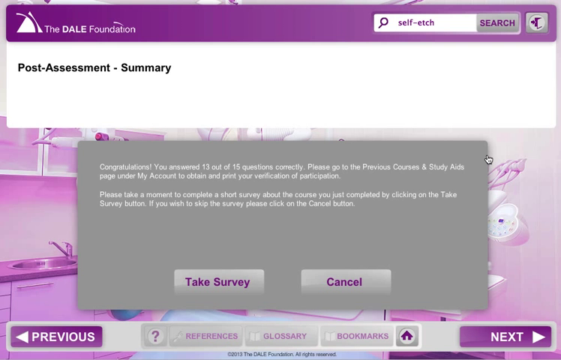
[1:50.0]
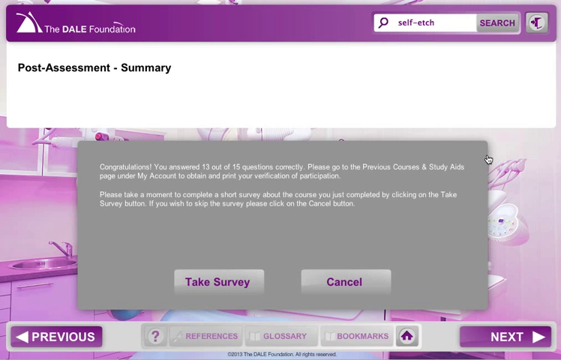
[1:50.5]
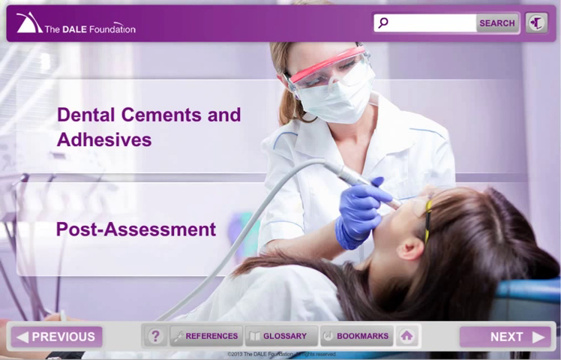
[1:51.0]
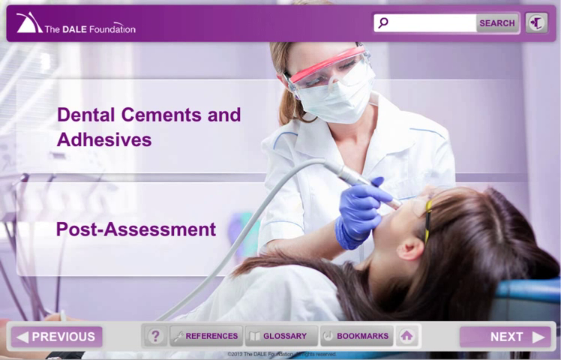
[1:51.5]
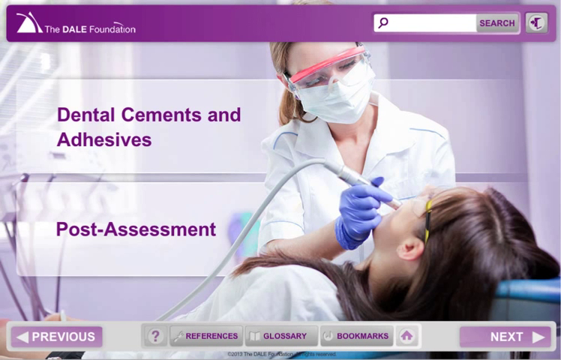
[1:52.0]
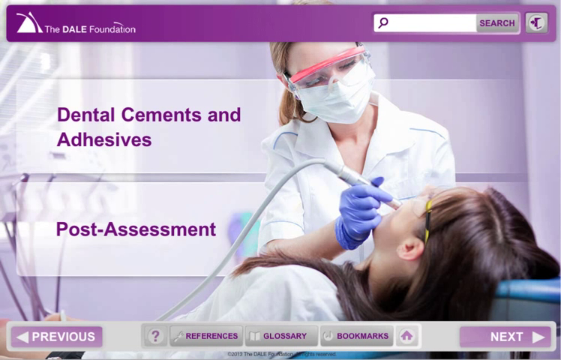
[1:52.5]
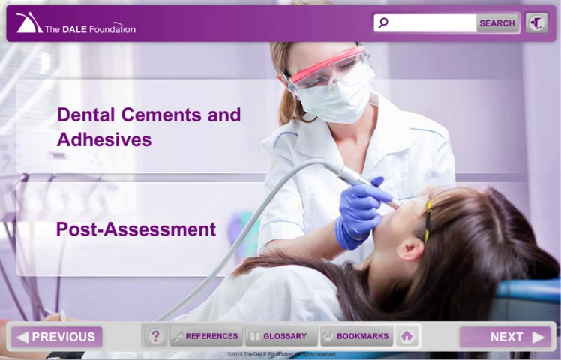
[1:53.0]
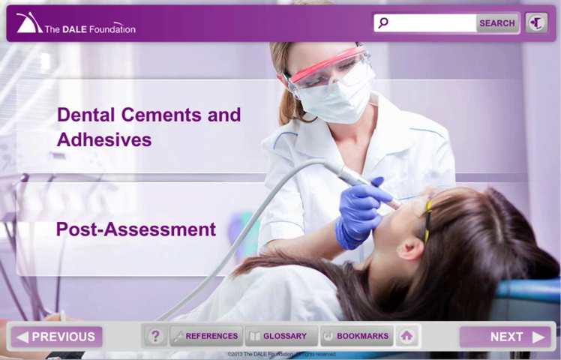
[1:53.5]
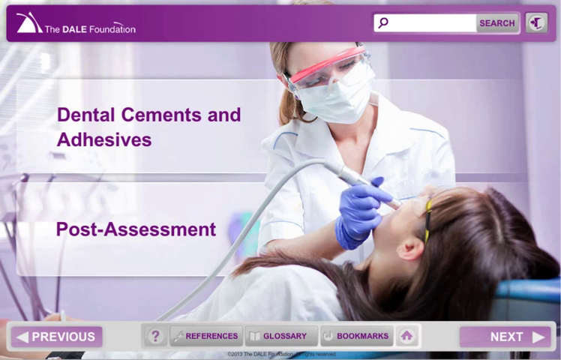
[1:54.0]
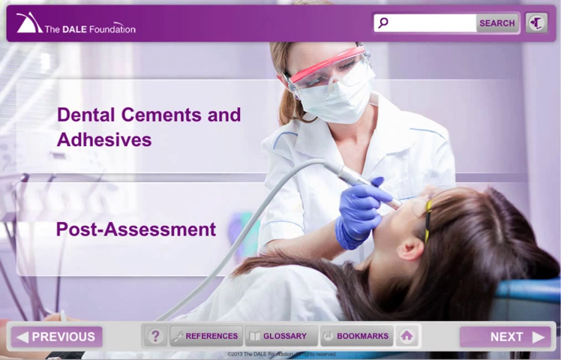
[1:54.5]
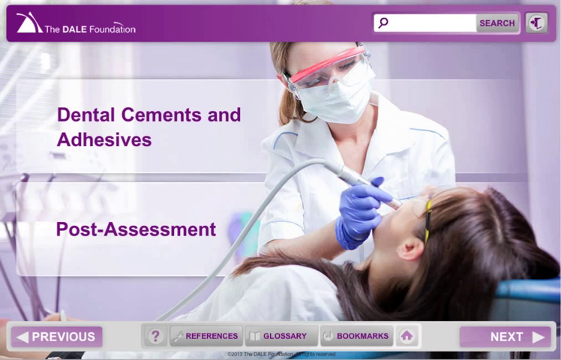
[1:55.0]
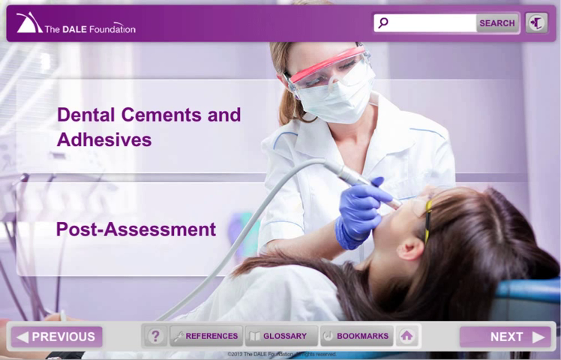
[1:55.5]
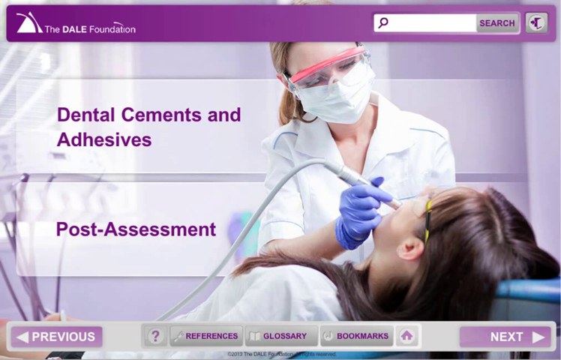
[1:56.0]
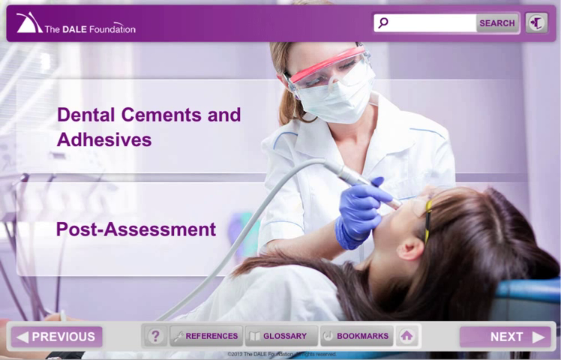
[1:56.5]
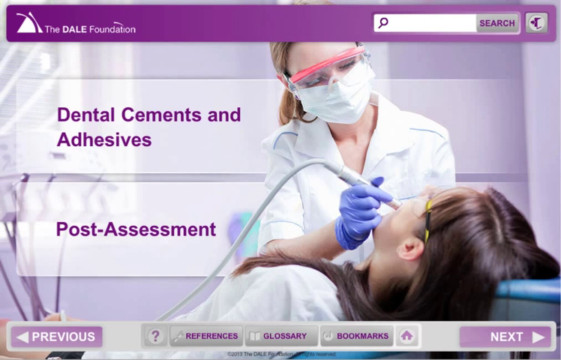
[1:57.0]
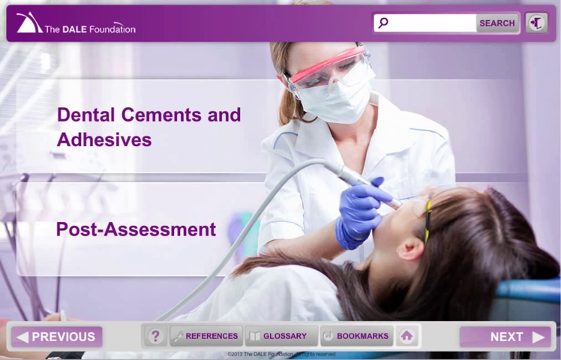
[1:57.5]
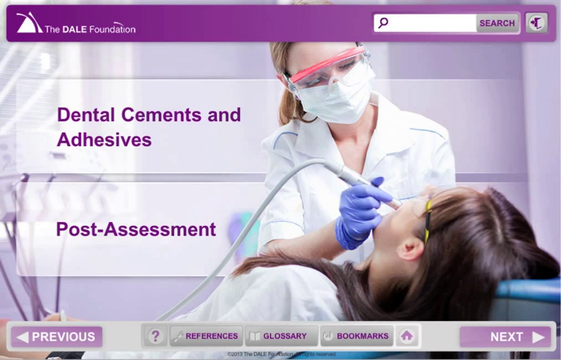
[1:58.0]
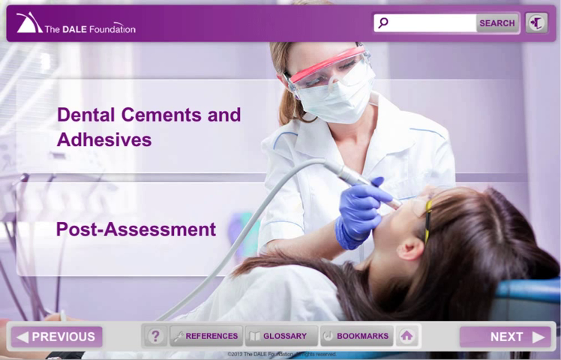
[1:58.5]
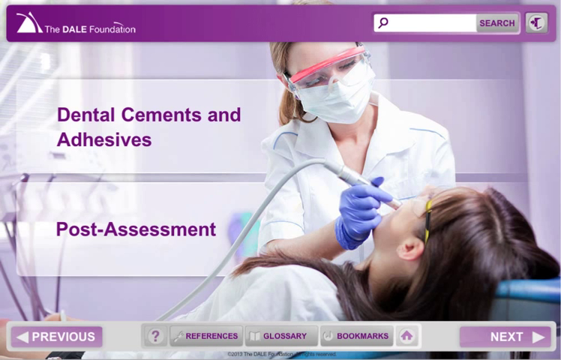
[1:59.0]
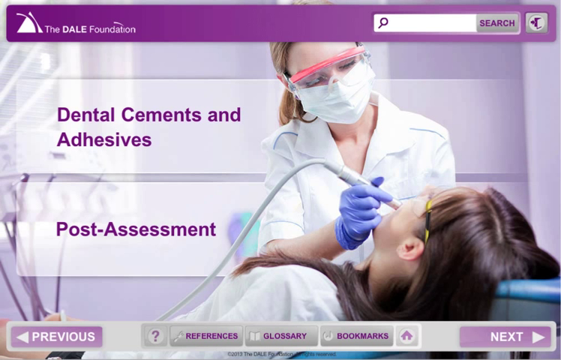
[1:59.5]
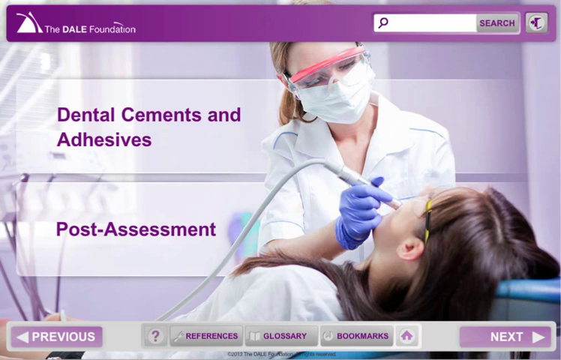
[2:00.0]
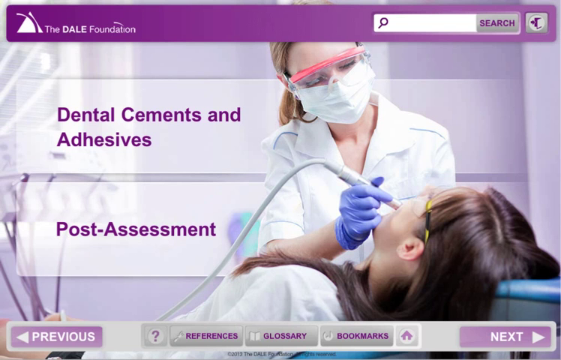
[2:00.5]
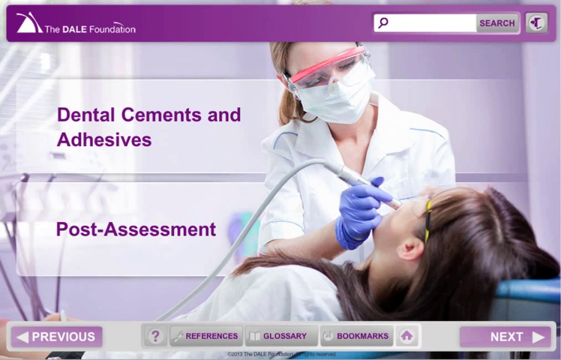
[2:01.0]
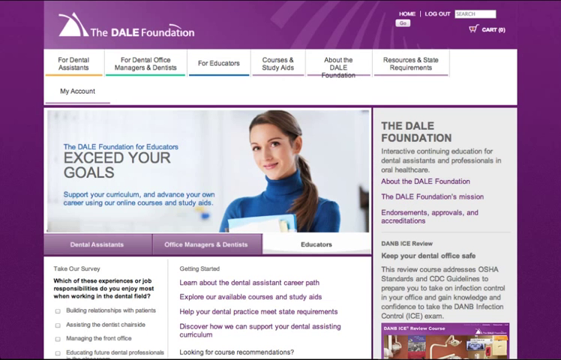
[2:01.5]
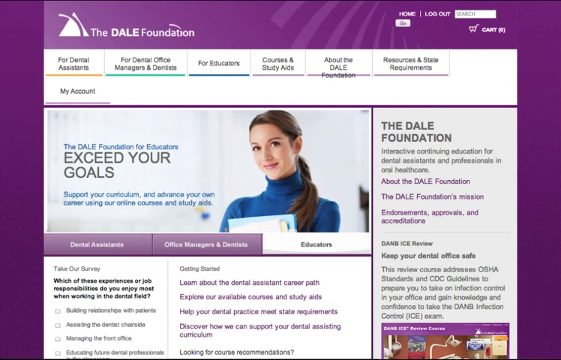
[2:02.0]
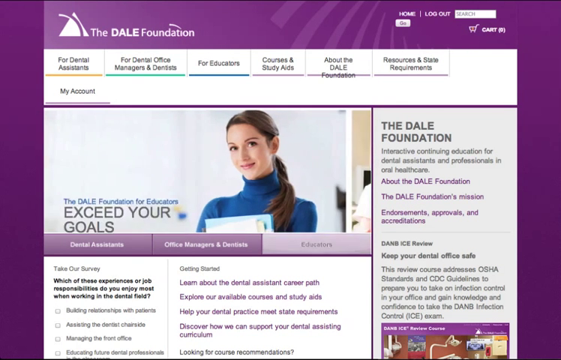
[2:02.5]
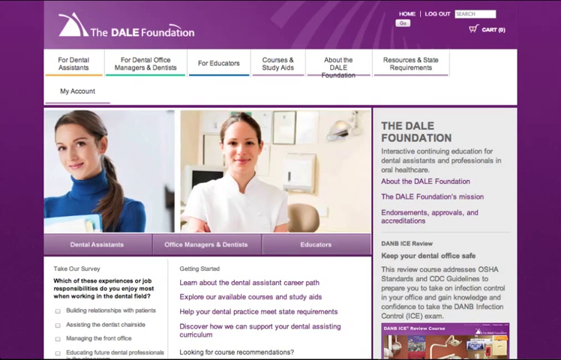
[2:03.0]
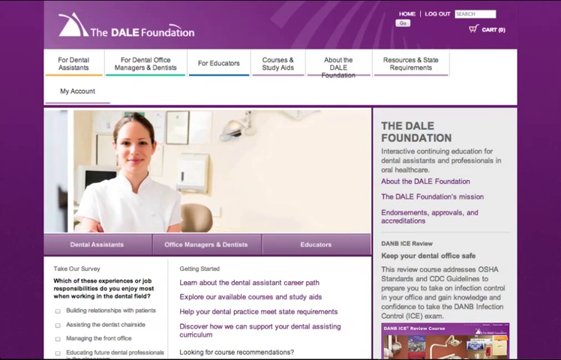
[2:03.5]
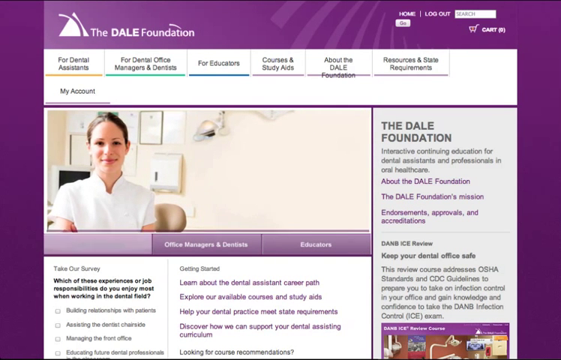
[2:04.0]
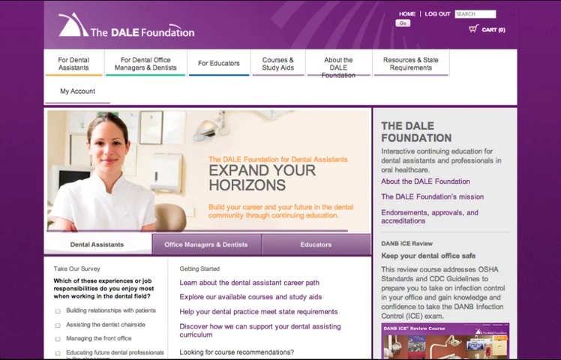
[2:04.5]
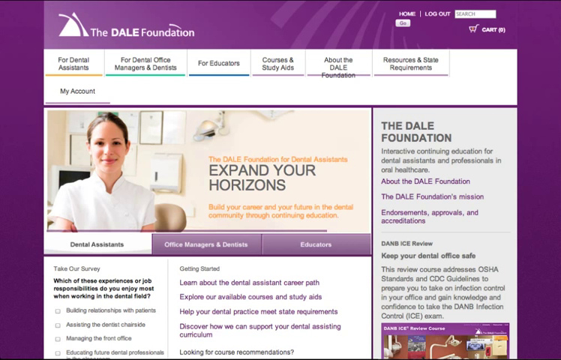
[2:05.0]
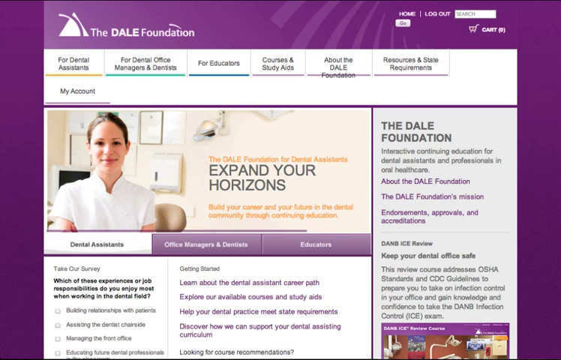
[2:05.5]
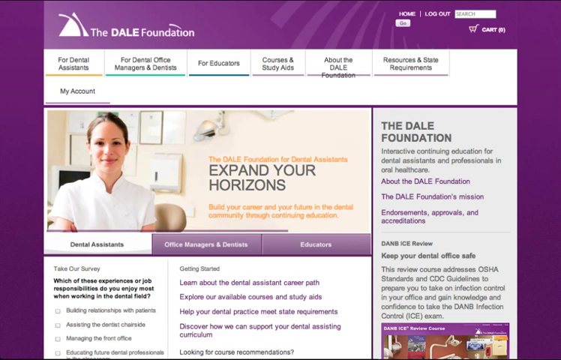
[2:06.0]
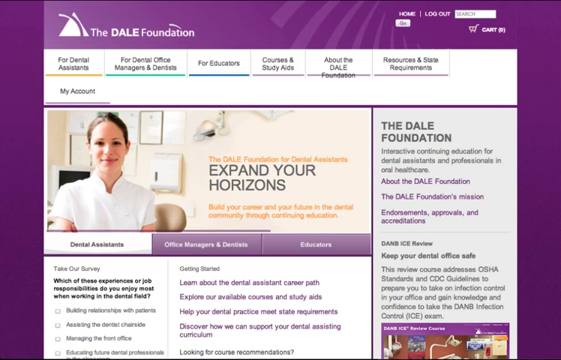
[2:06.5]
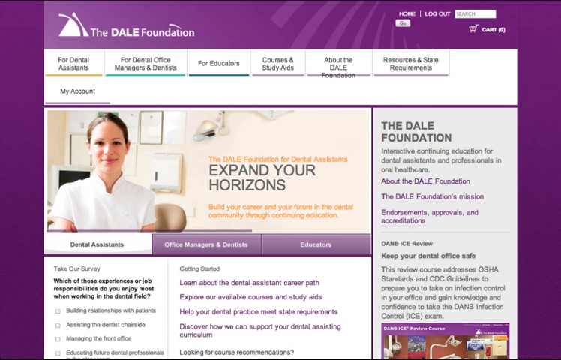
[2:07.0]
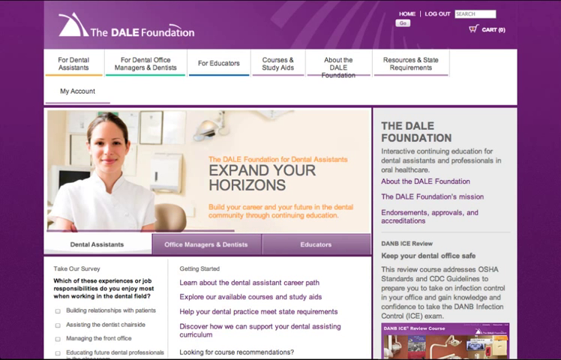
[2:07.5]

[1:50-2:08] The person returns to the same screen as at the start, with the dentist working on the patient, and "dental cements and adhesives" and "post-assessment" as two clickable options on the left. The bottom of the screen still shows previous, next, references, glossary and bookmarks. A homepage follows that seems to show the user's account, with an option to log out at the top, and a cart option, as though things can be purchased on the website. It looks like an intranet page, with various information about the Dale Foundation, images of different dentists at the top, and tabs that can be clicked for more information. Everything follows a purple theme, with the text, text boxes and background in similar colours, though the tabs at the top have different colours such as orange, green and blue.